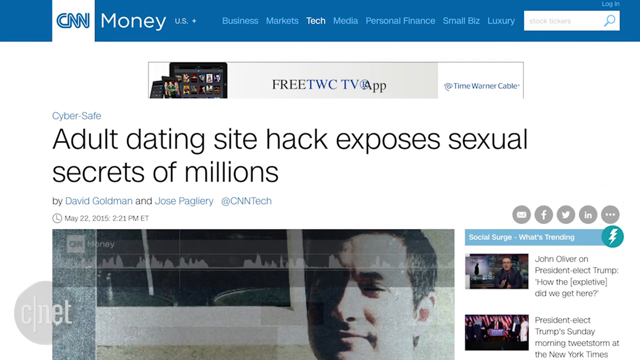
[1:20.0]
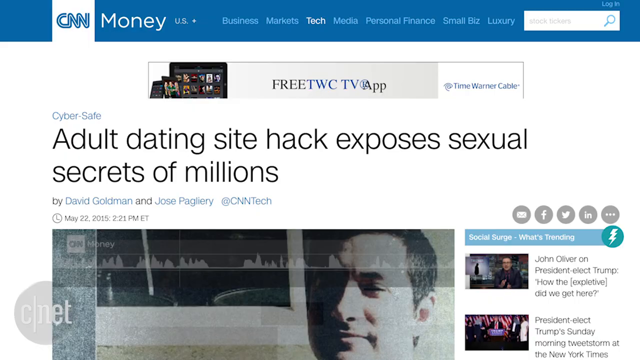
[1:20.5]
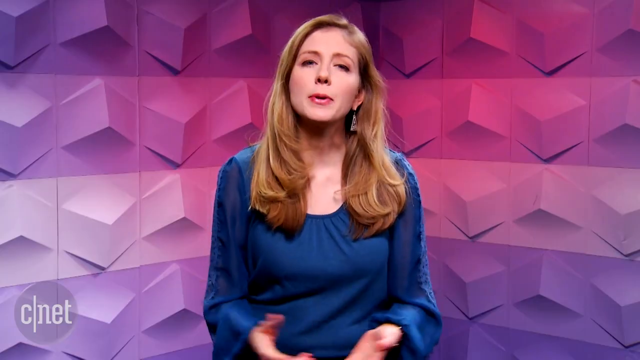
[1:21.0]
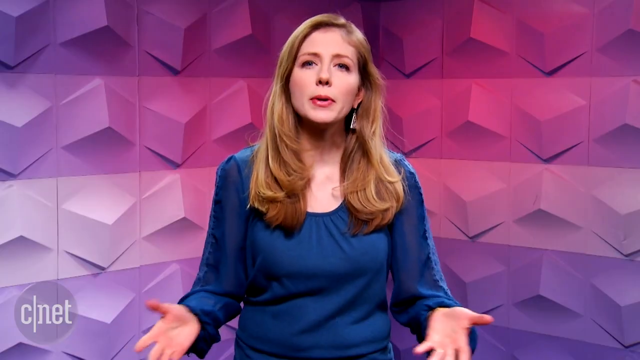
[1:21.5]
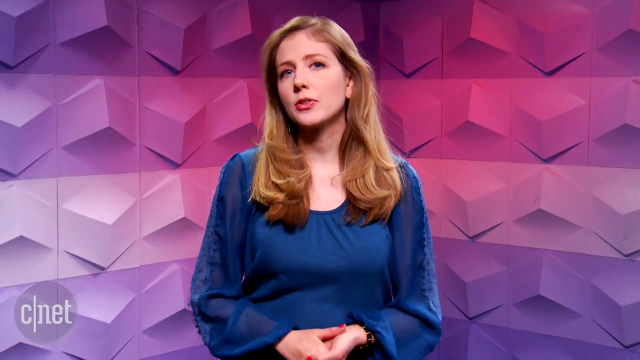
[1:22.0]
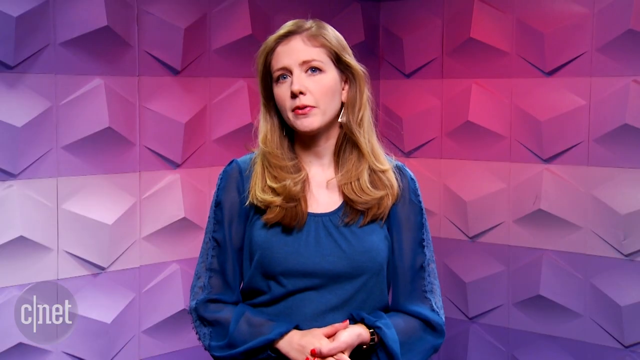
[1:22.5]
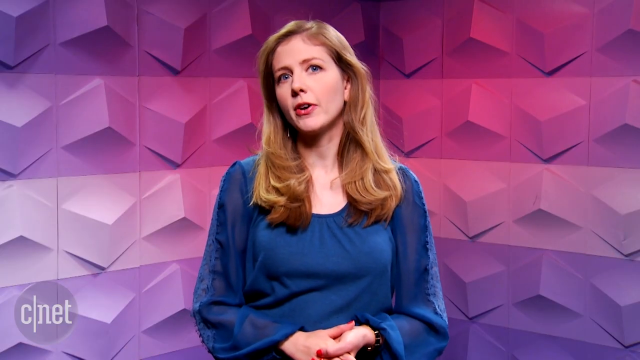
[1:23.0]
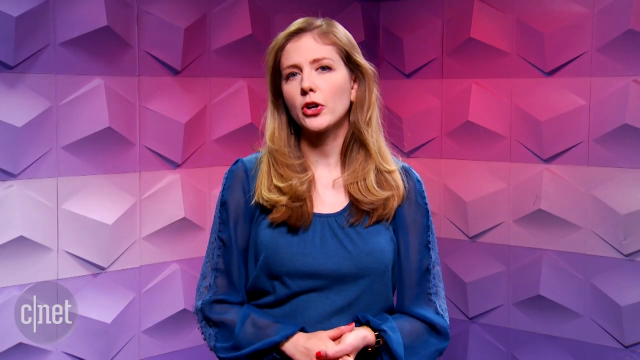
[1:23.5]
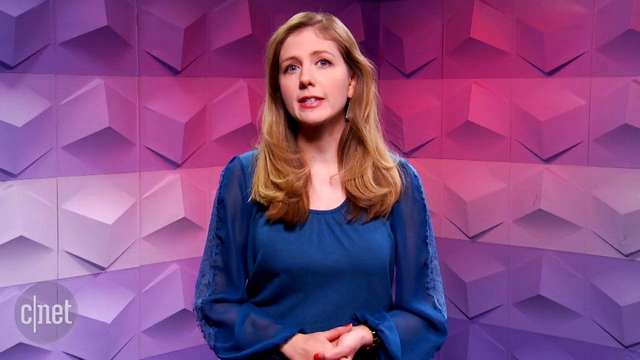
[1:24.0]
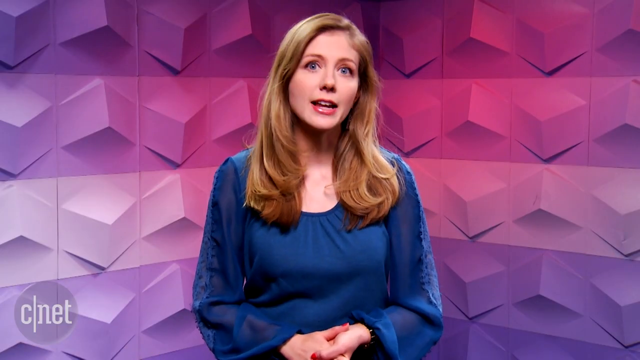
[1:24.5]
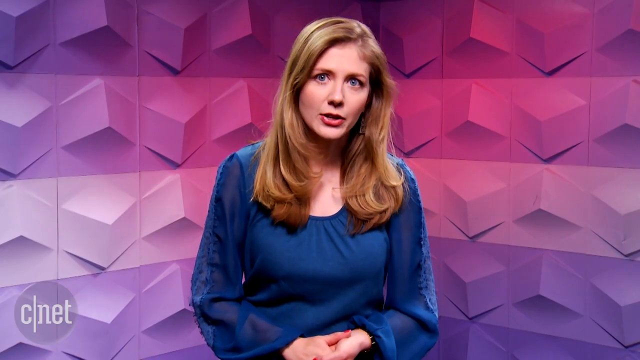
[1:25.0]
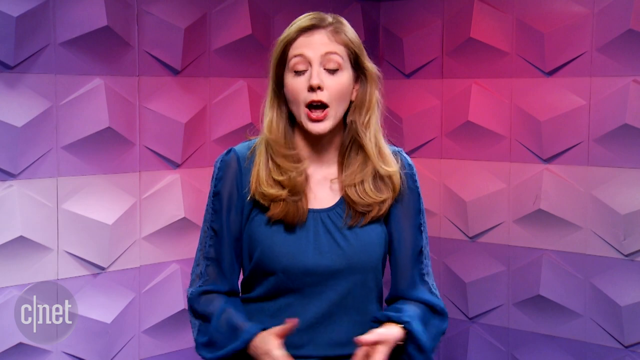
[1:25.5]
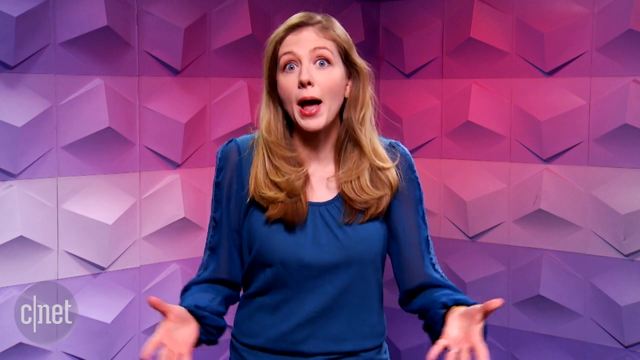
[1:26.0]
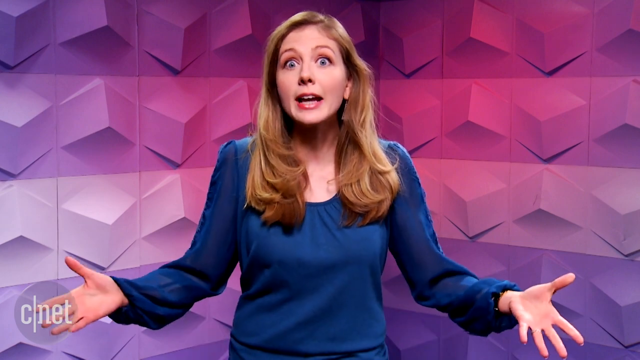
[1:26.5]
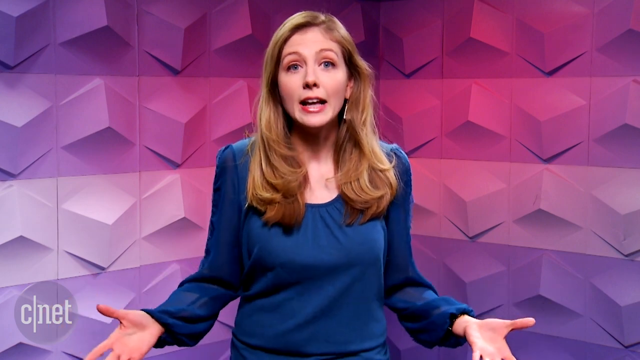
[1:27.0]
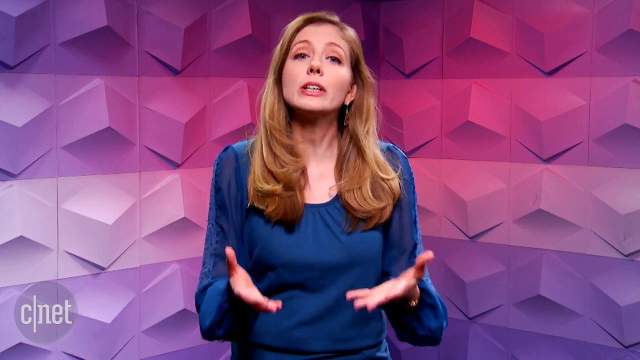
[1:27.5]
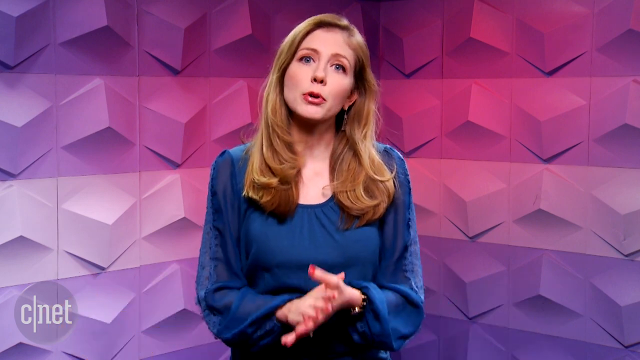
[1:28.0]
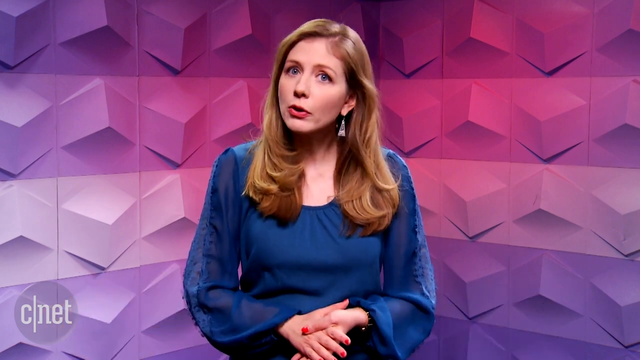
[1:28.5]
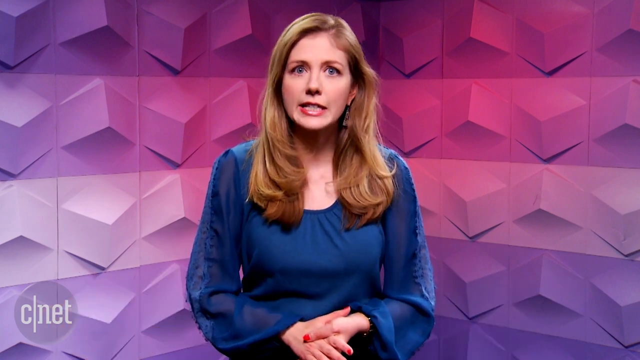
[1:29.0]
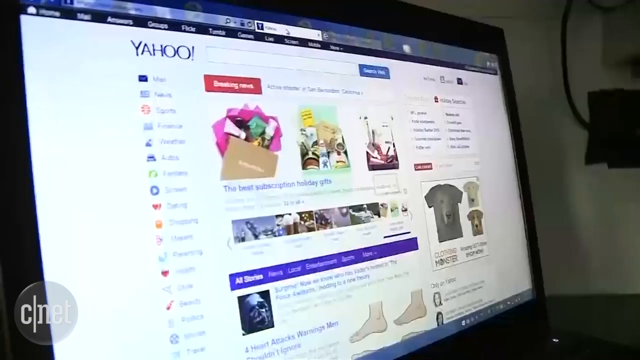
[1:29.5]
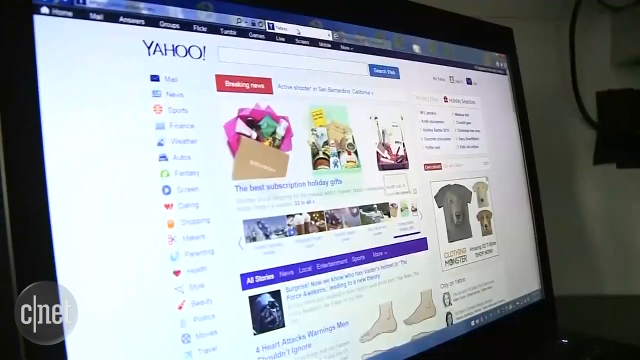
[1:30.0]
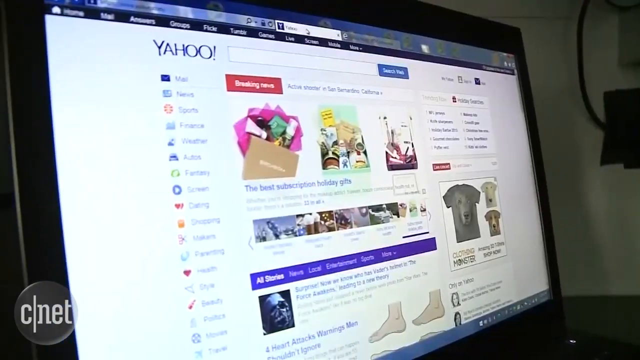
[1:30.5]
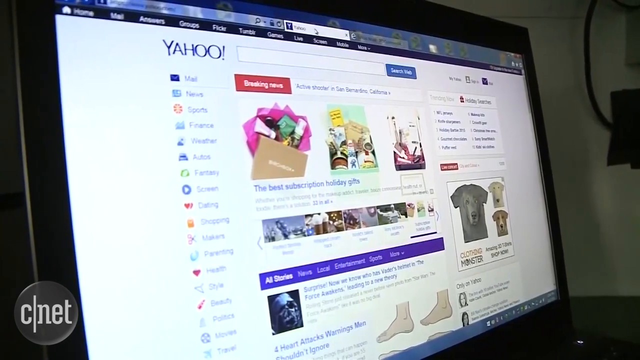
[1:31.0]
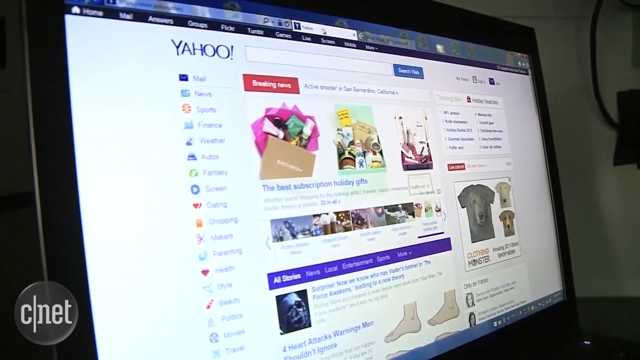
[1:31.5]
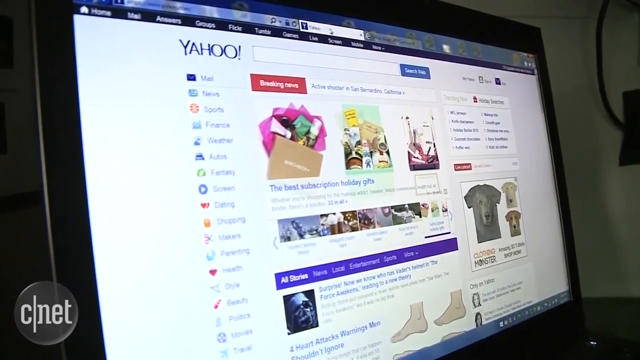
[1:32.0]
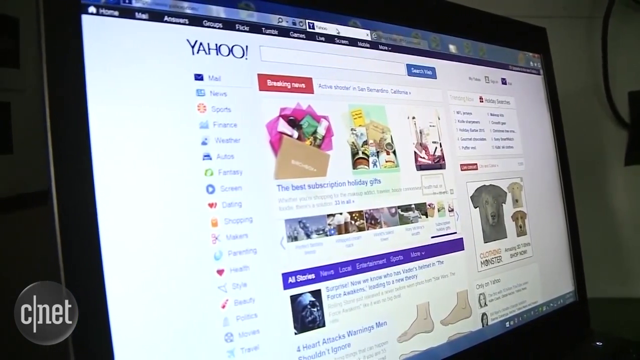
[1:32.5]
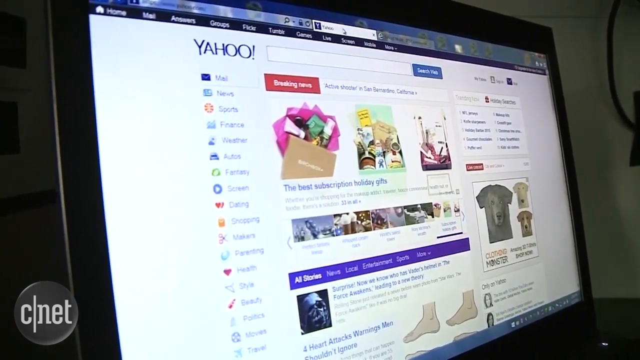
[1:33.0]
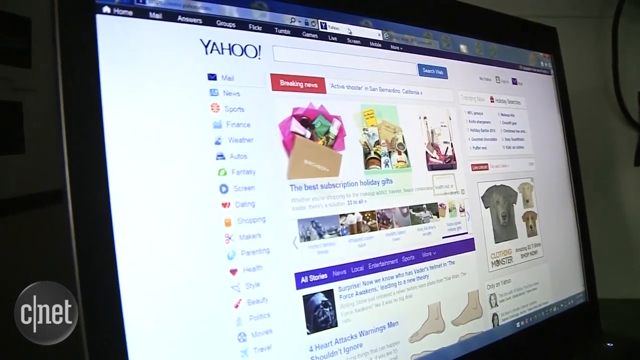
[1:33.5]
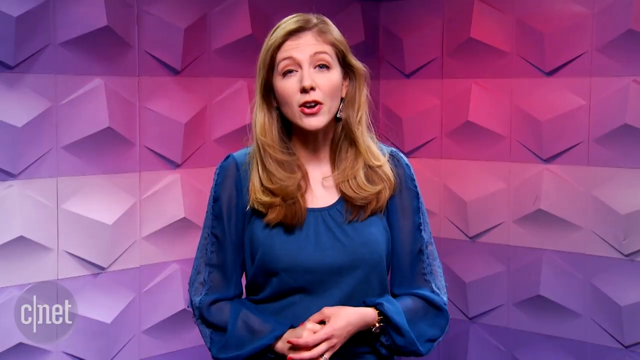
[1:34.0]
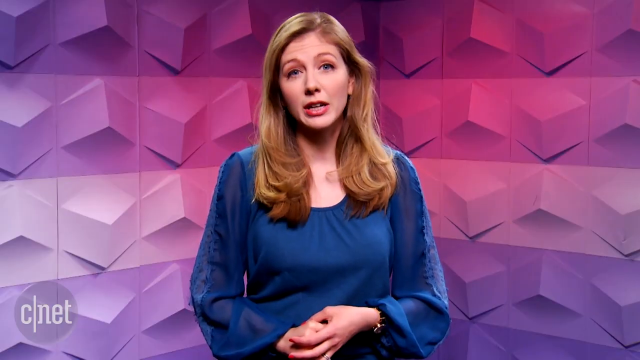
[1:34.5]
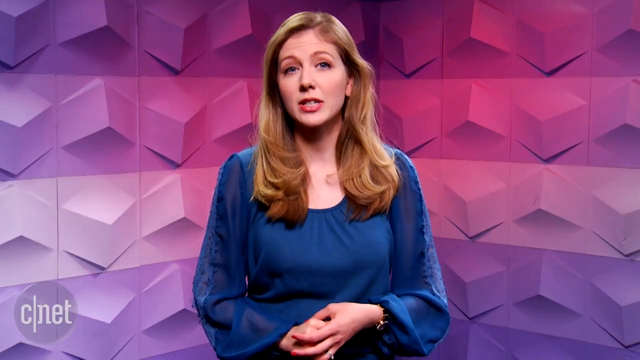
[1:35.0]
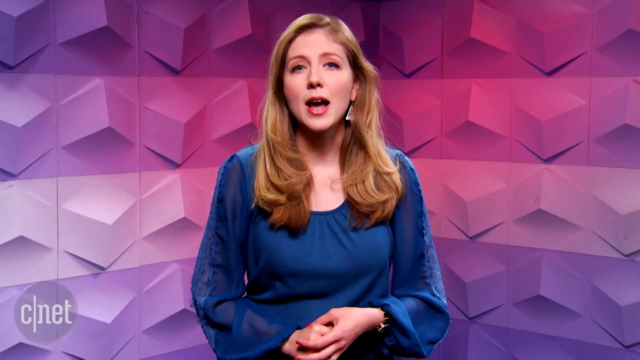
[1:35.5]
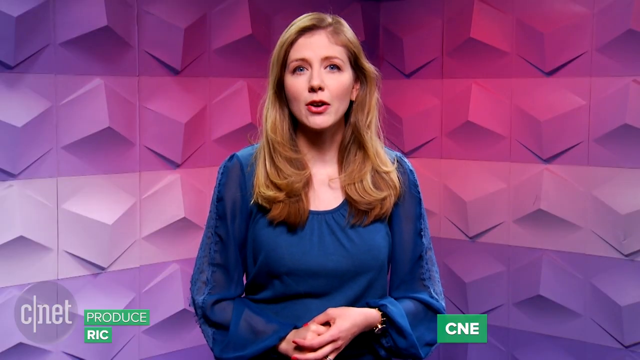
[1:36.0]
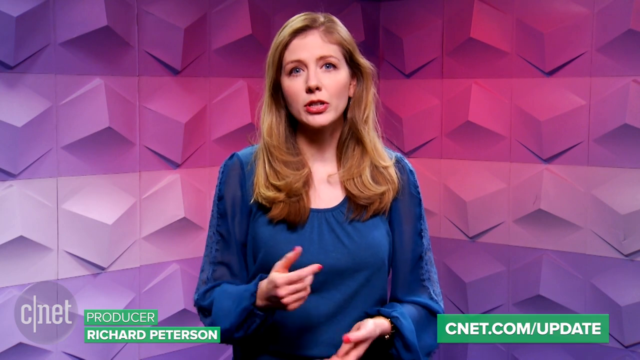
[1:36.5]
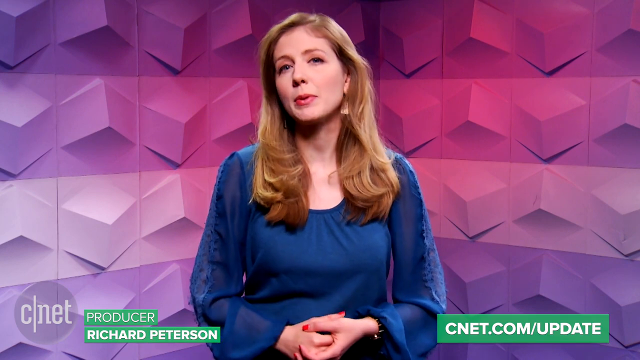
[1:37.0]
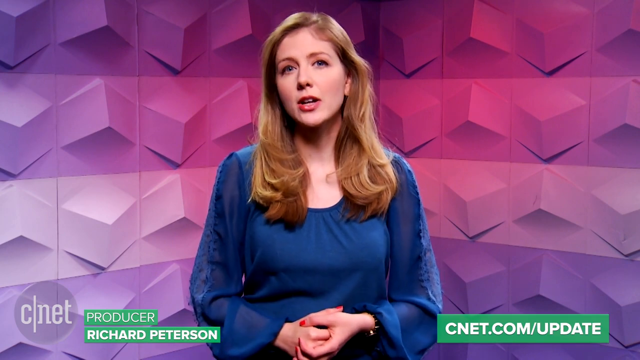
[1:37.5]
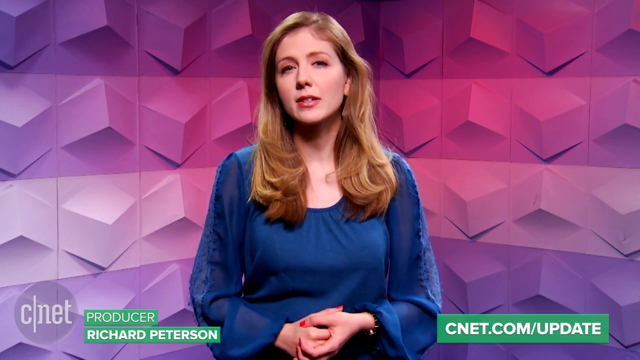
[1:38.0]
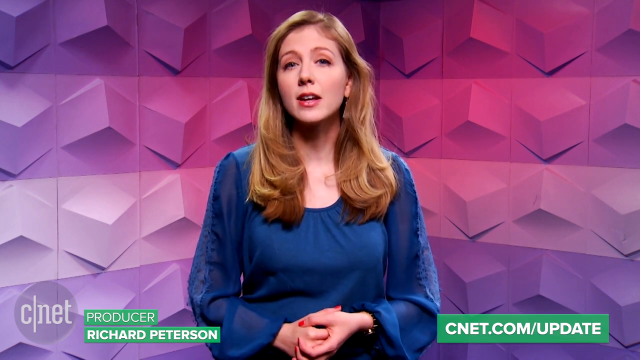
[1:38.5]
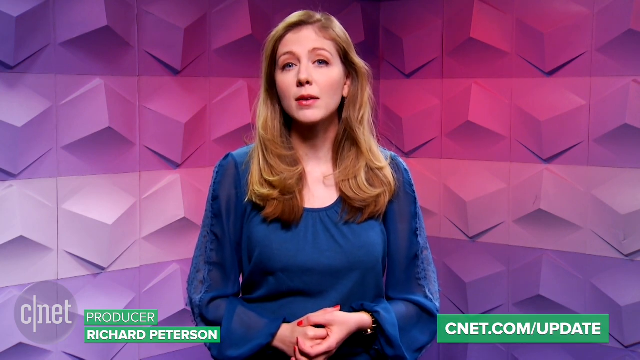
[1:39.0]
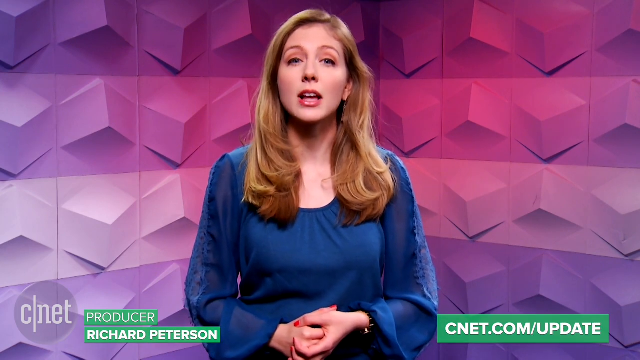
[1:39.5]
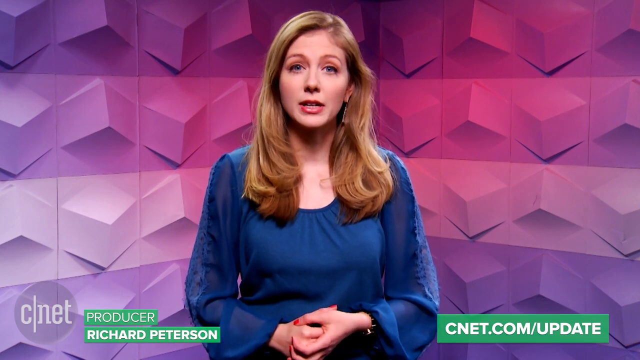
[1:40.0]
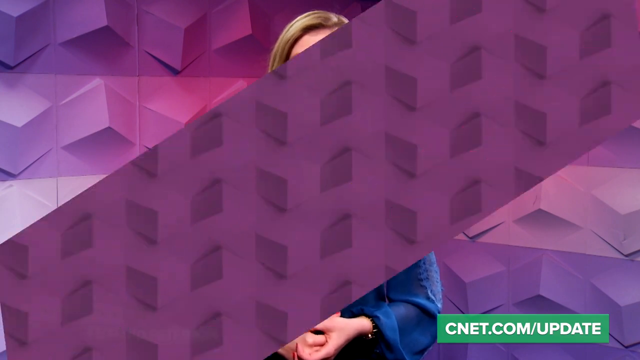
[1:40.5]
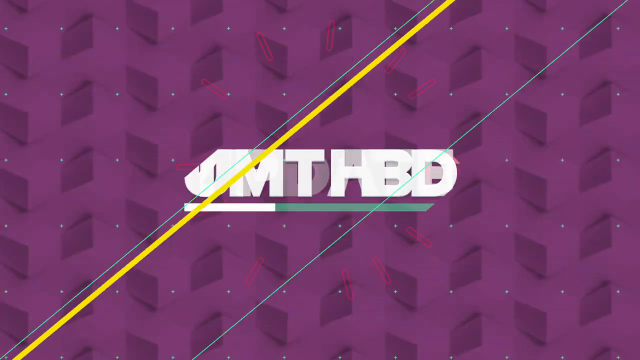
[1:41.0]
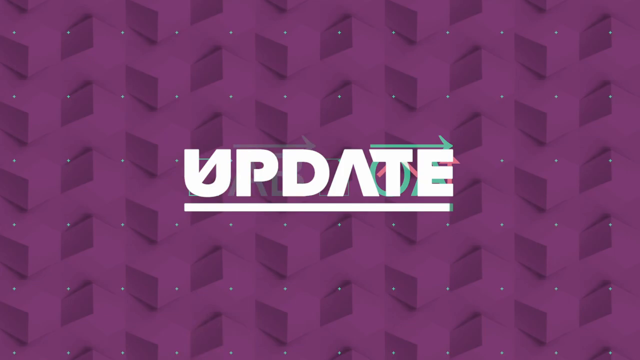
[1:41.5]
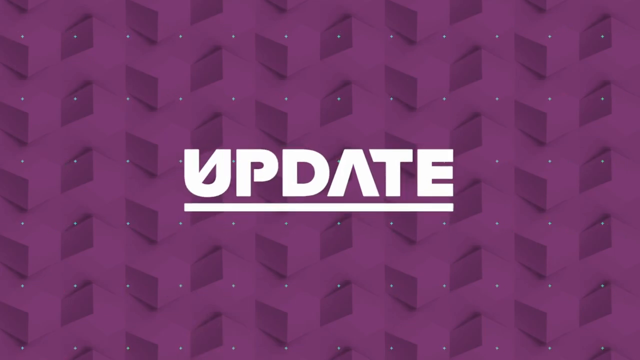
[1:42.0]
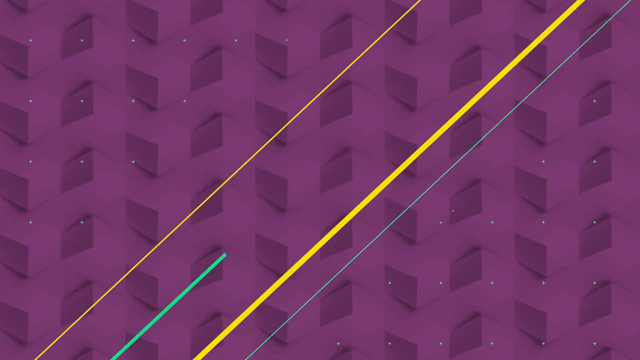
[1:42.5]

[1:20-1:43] A young white woman with red painted nails and brown to blondish hair, wearing a blue dress, is talking. A laptop then appears, apparently showing someone doing research. On the laptop, "breaking news" is written in red, though the rest is not clear, and there is an article that looks like the one about the adult dating site, reading "exposes sexual secret of." Some clothes are also visible, apparently as if the person came across new clothes, along with other apps.